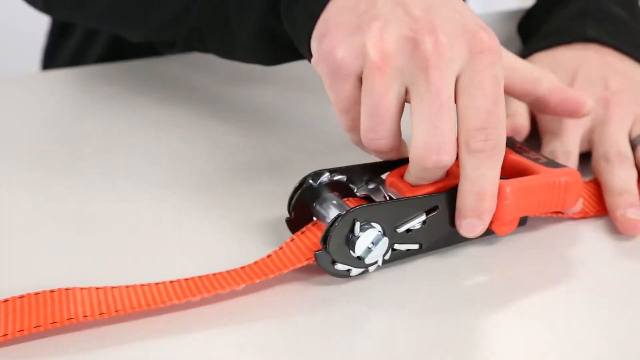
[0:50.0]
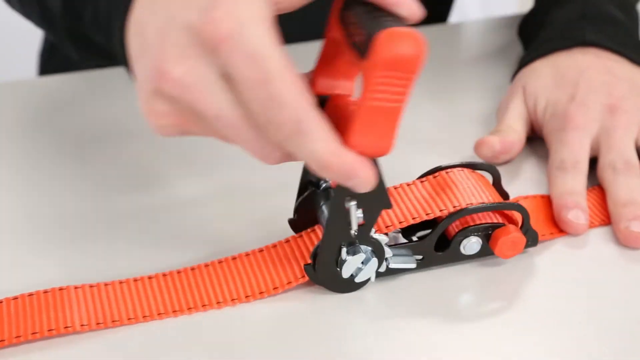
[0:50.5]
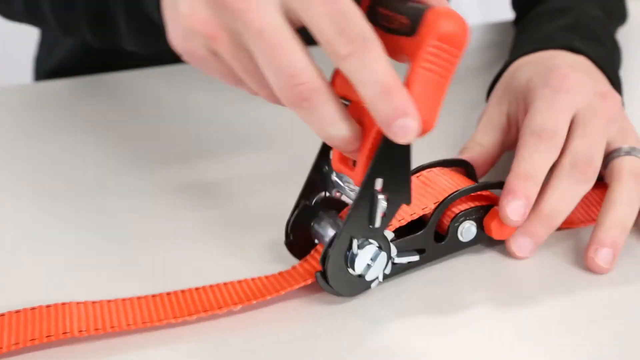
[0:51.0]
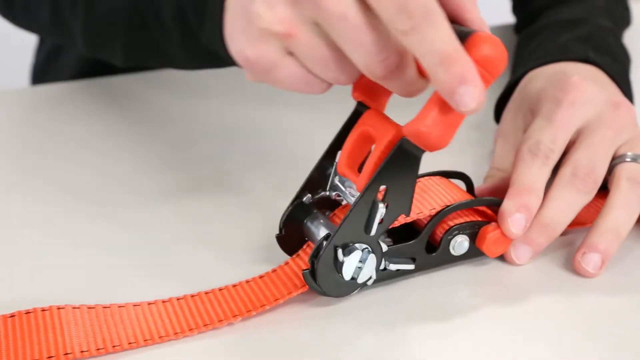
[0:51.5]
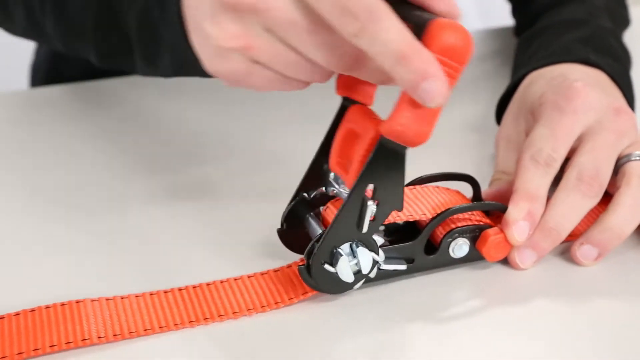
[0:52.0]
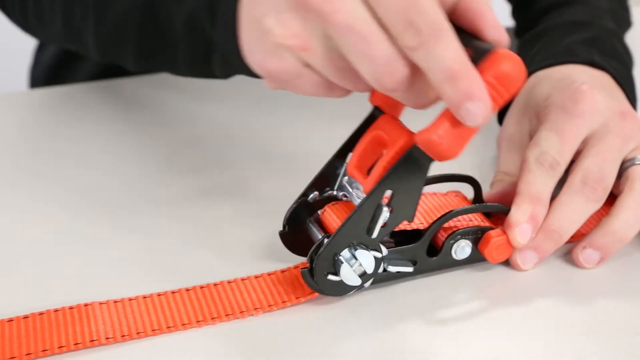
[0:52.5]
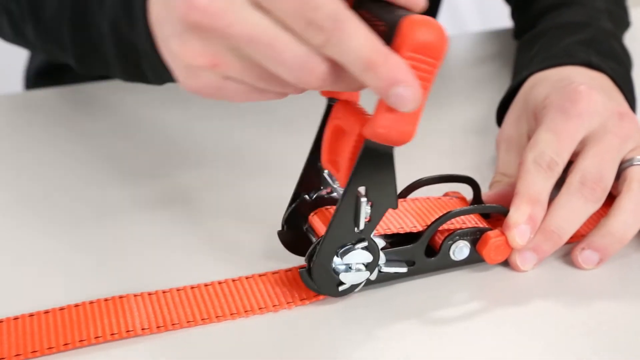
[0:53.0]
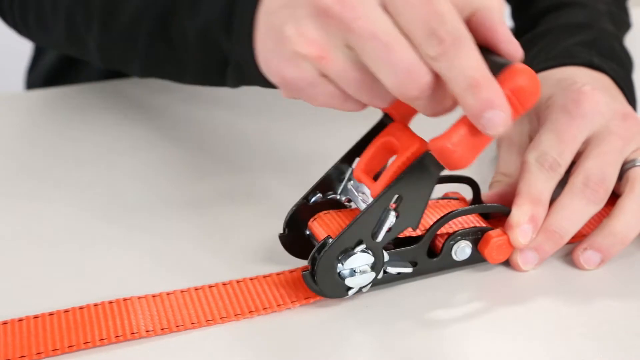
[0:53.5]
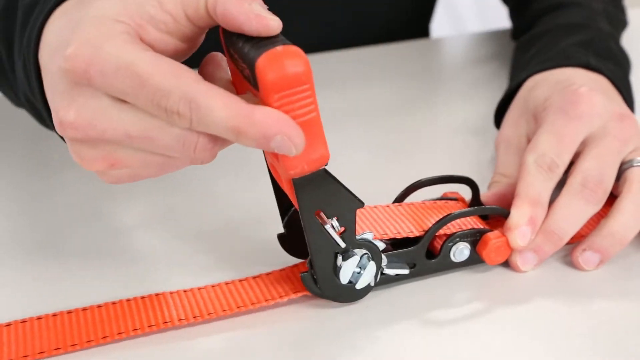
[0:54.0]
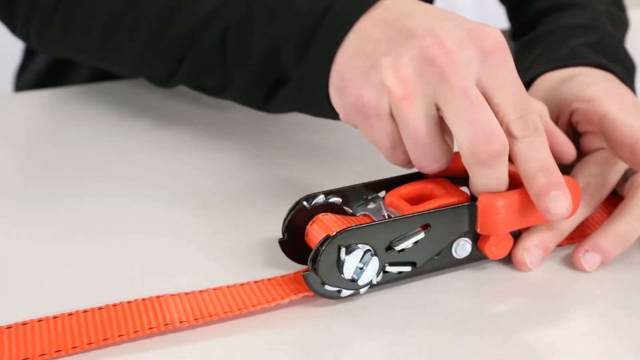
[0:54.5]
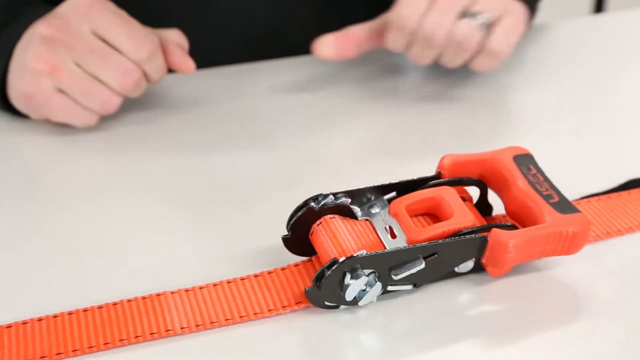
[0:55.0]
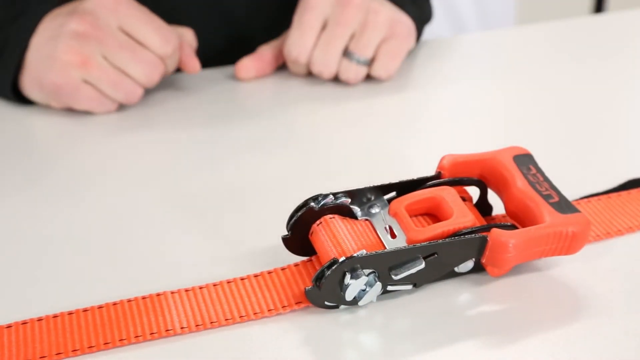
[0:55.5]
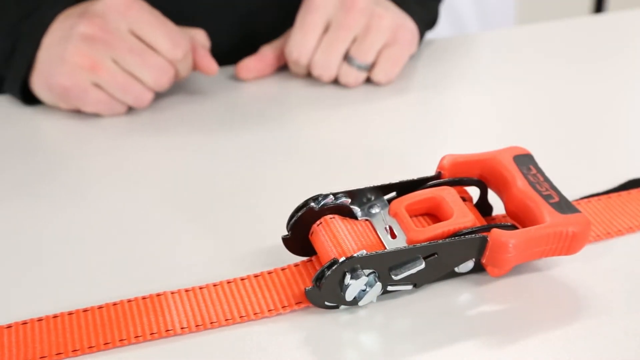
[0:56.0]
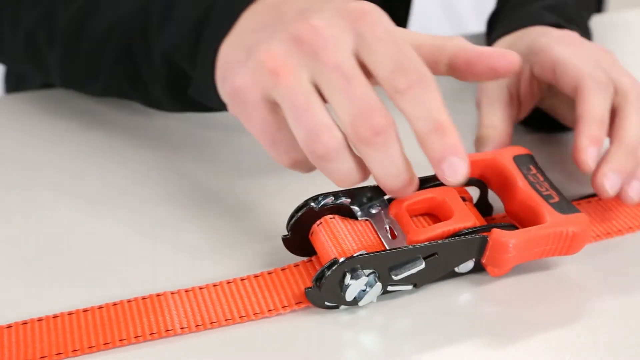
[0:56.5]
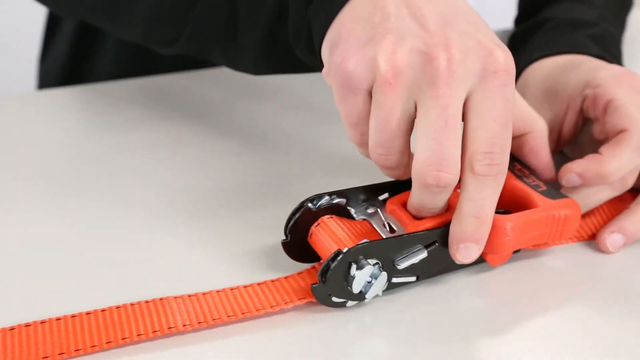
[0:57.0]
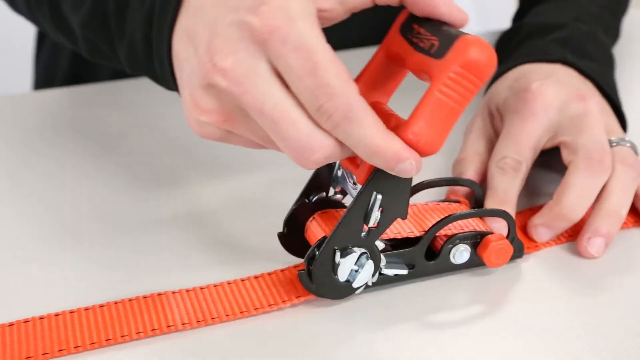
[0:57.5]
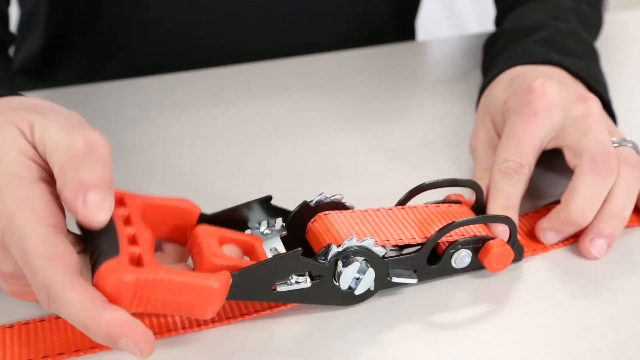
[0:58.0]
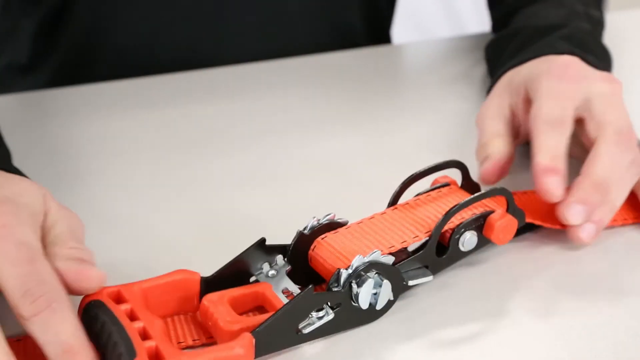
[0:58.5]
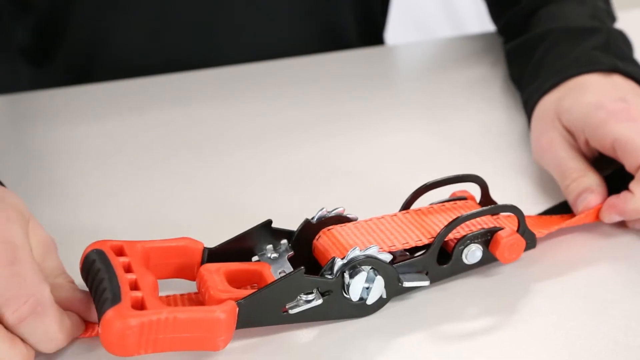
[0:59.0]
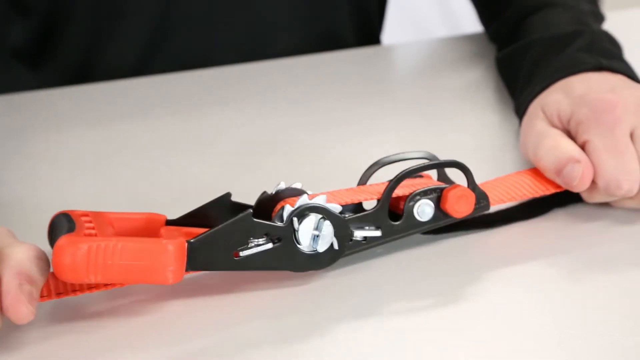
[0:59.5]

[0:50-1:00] The man uses what looks like a lever on the left side of the buckle. It is orange, and on top of it is a black rectangular bar that says "uscc" with orange in between. He moves it up and down, about maybe three or four times, which feeds the strap into the buckle as if making it smaller. The strap itself is orange with black stitching on its left and right sides. When he is done, he removes his hands and moves them closer to his body, then goes back to the strap, opens the buckle again, and pulls on each end of the strap to tighten it.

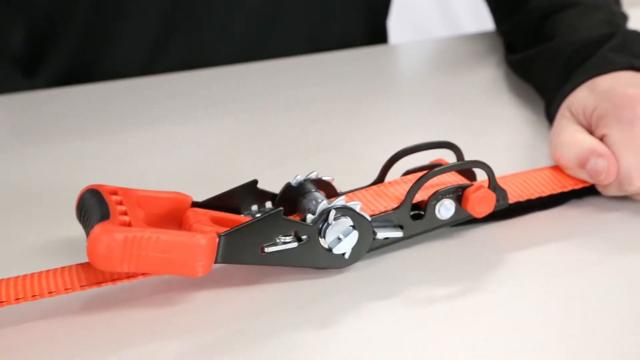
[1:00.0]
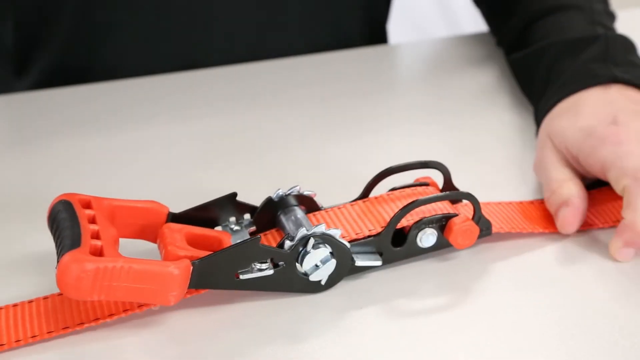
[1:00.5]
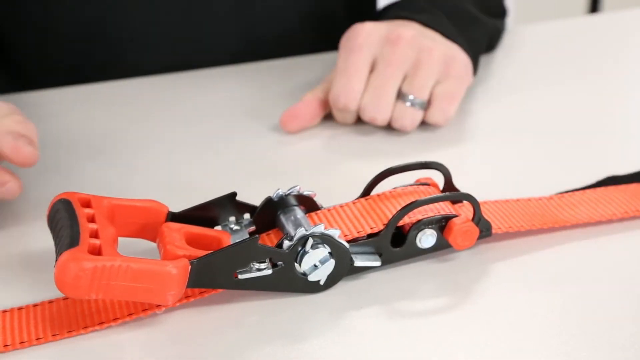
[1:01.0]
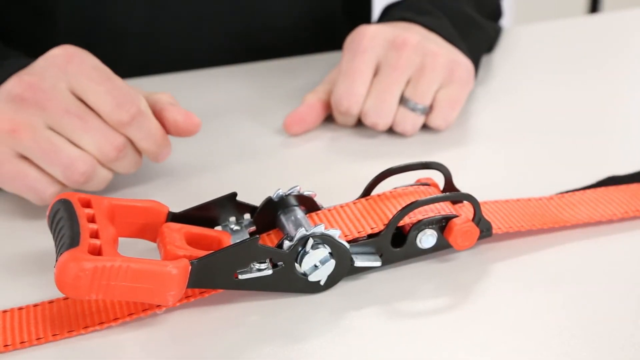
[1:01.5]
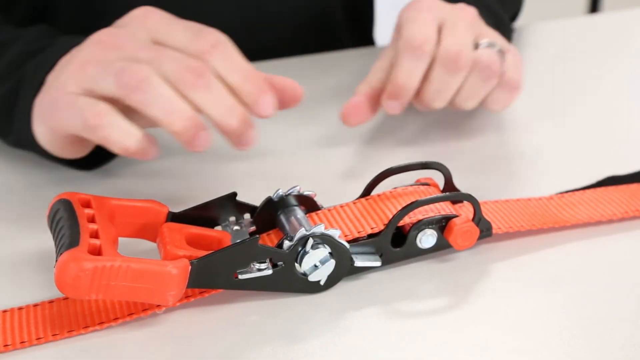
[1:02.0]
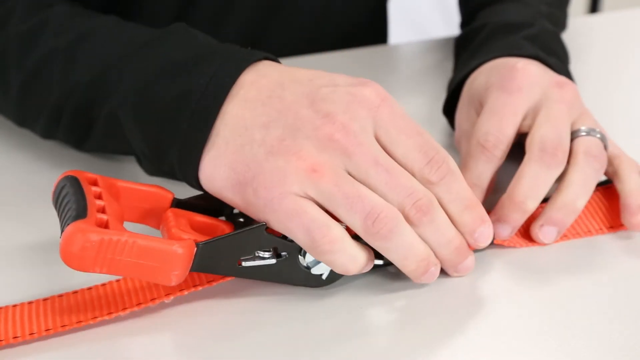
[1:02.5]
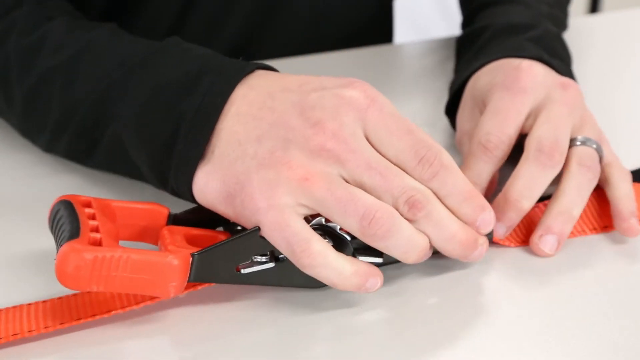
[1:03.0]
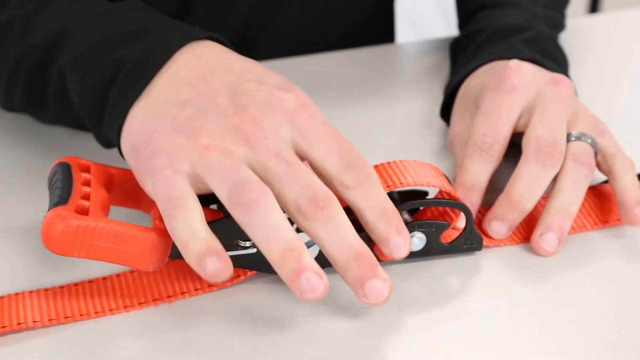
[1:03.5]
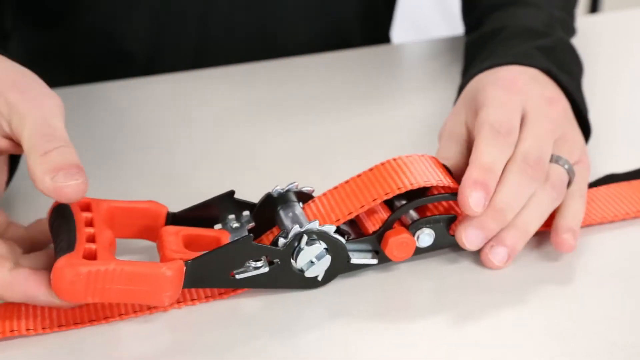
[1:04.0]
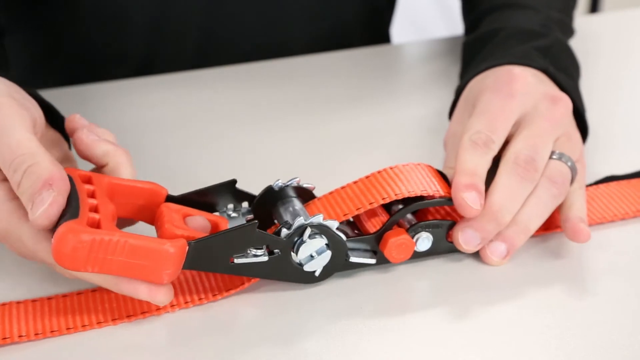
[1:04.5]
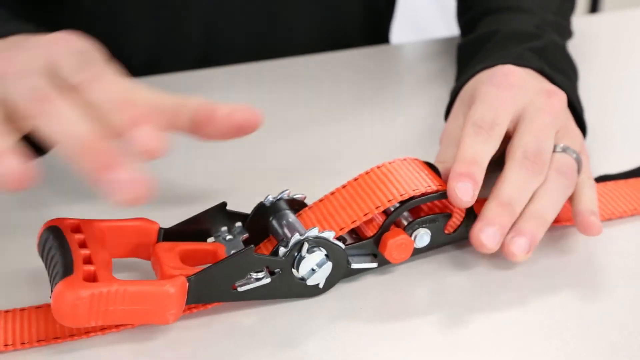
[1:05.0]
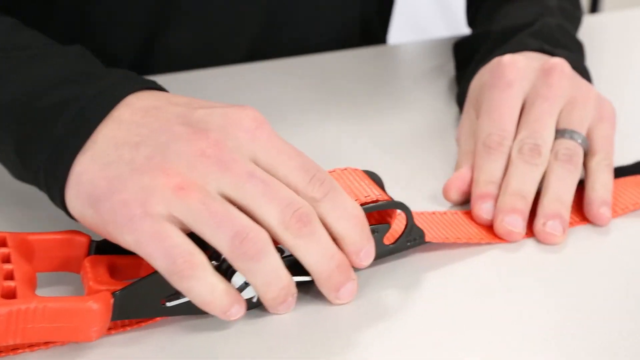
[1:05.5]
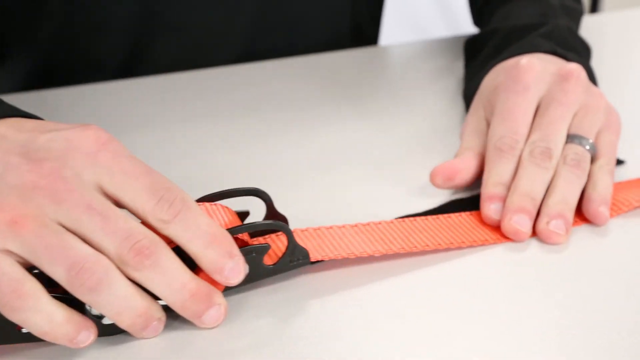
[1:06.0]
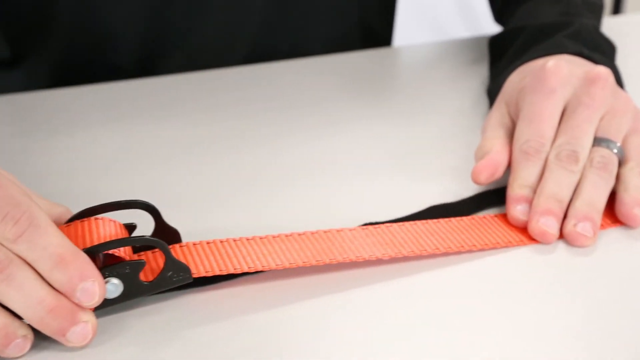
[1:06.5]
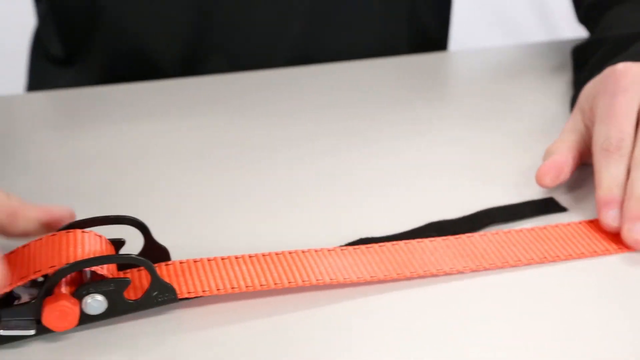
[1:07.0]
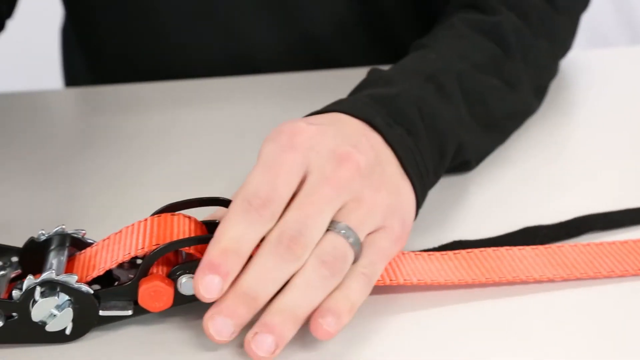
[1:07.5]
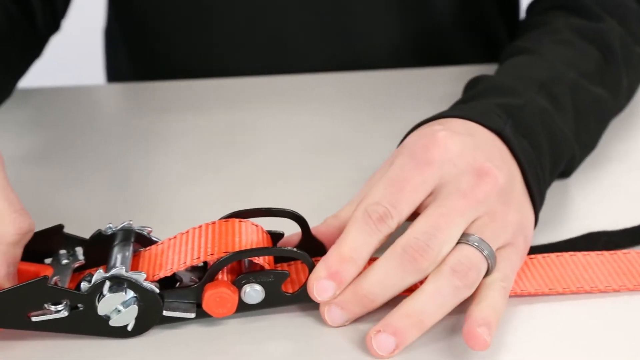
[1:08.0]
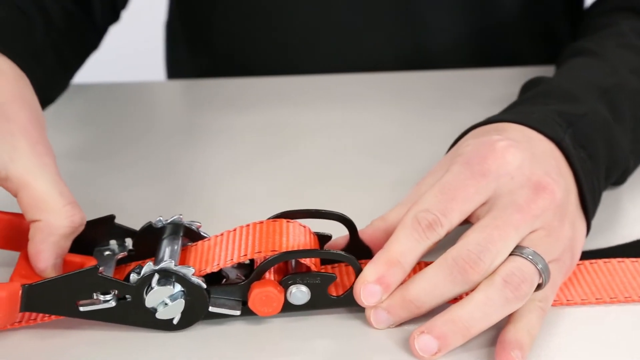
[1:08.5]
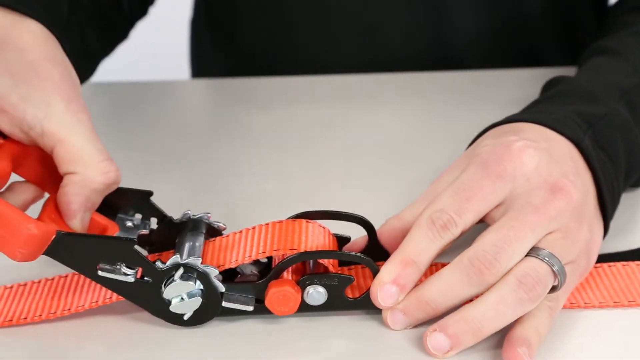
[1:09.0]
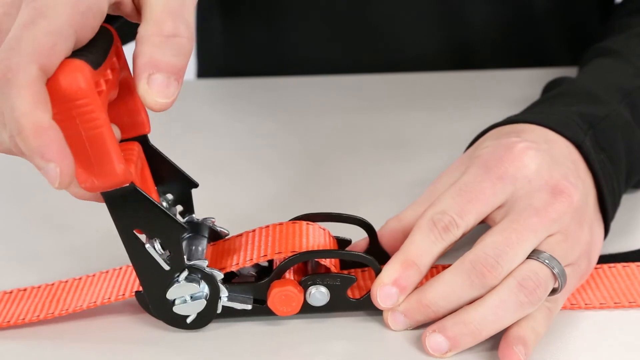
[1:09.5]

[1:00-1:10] The strap is fed into the buckle. The man pulls the strap up a bit in the center, then slowly moves it to the left as if making it longer. With his left hand he holds down the strap on the right side of the frame while his other hand pulls the buckle, and the strap on the right side gets longer. A thin black strap is behind it as well, somewhat peeking out of the center.